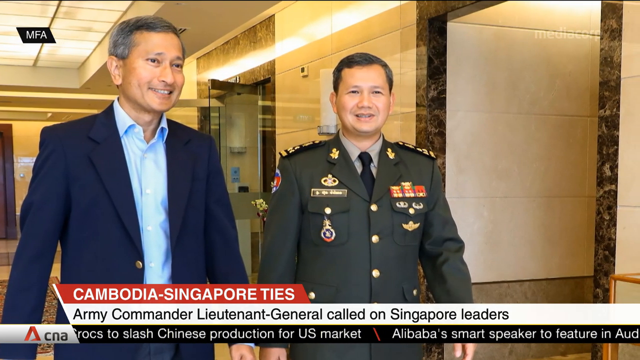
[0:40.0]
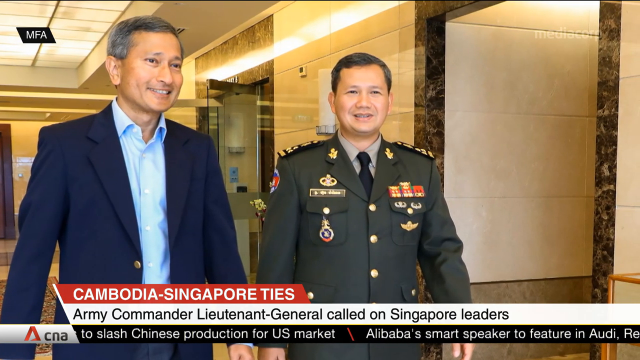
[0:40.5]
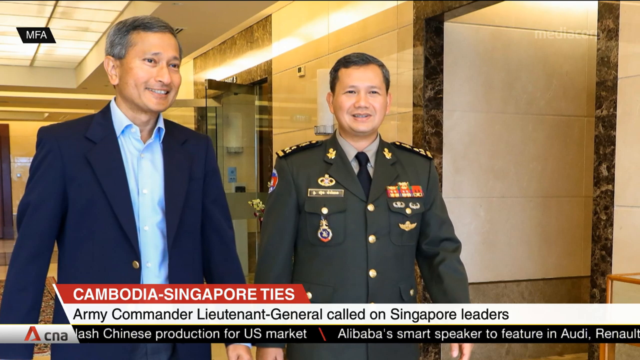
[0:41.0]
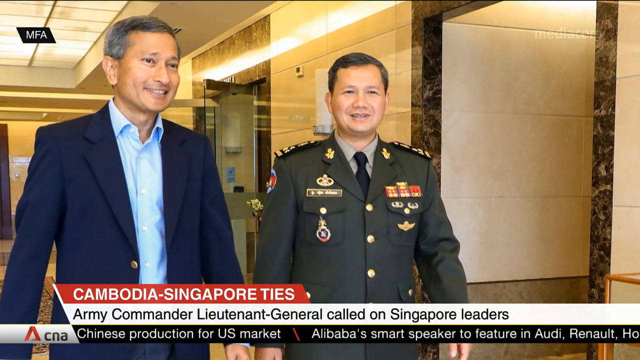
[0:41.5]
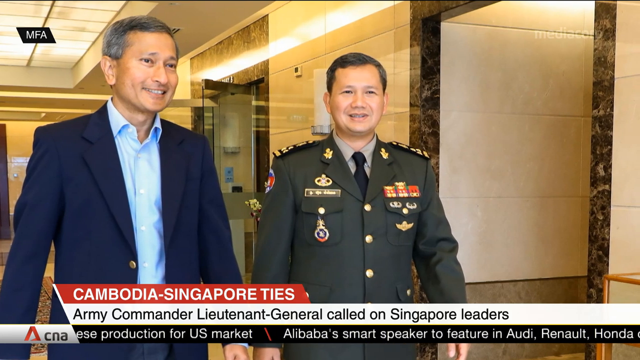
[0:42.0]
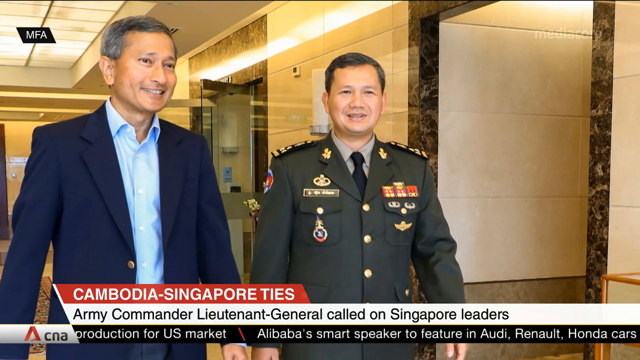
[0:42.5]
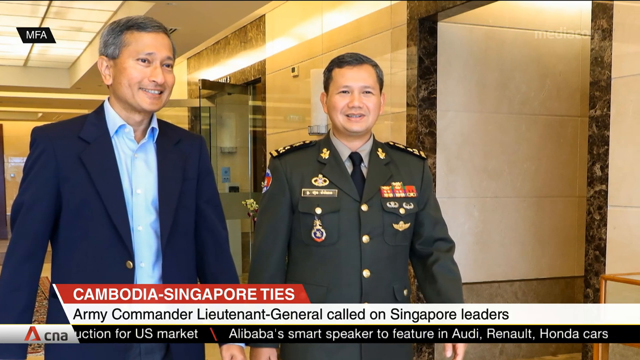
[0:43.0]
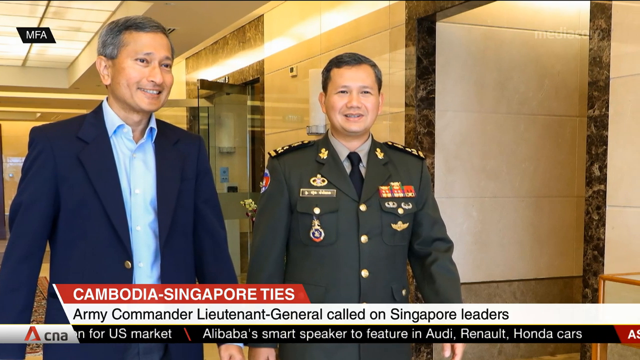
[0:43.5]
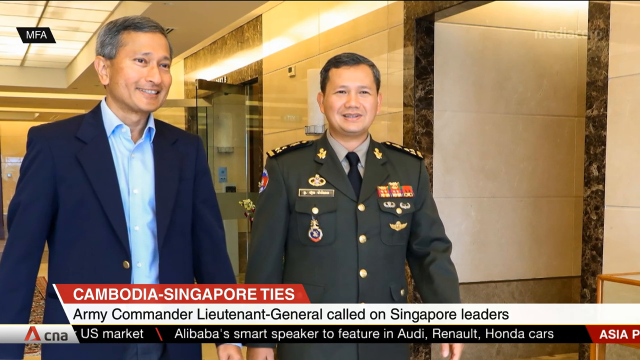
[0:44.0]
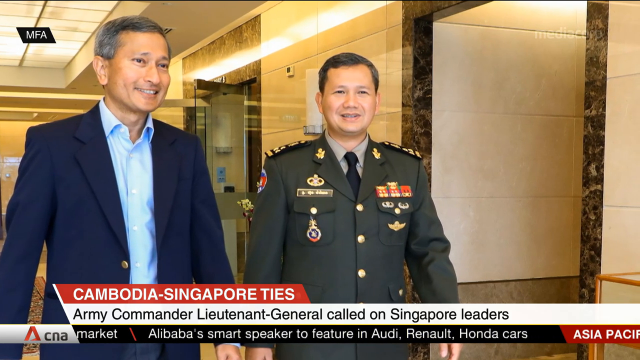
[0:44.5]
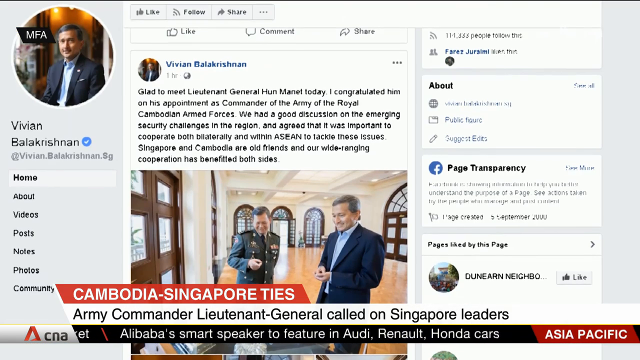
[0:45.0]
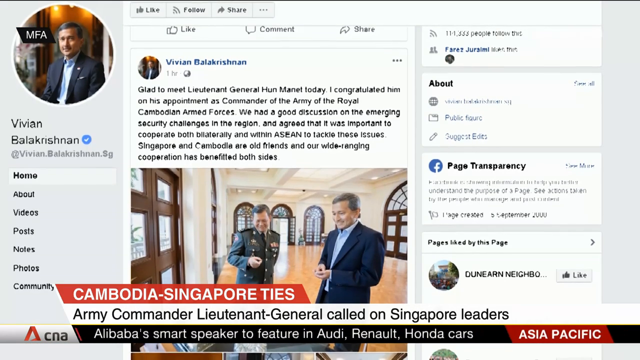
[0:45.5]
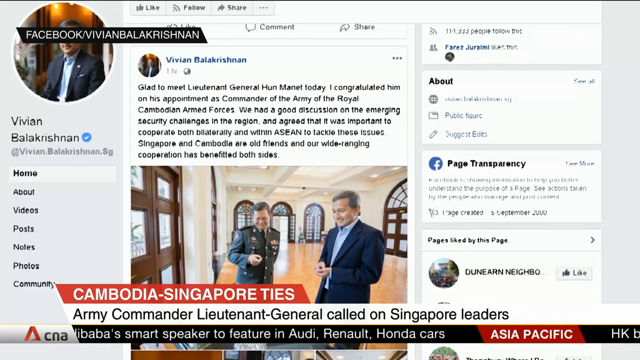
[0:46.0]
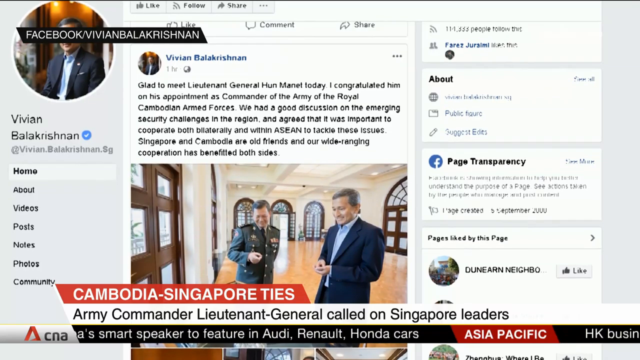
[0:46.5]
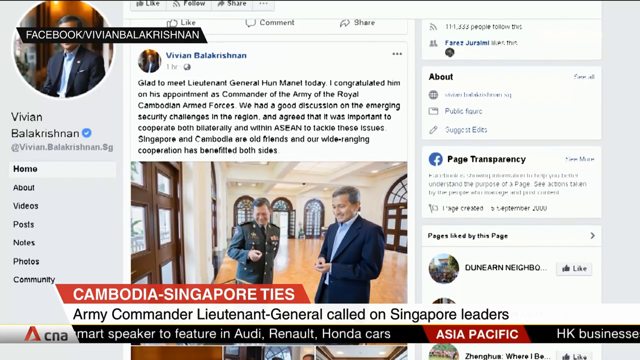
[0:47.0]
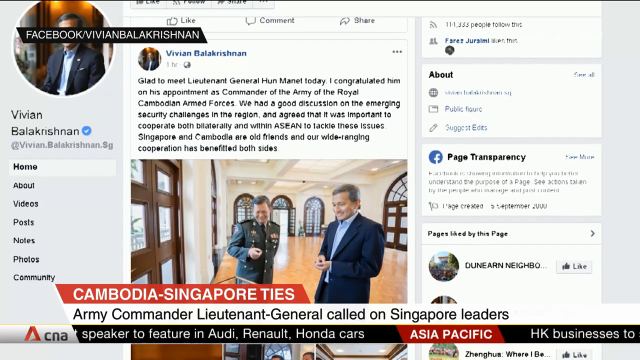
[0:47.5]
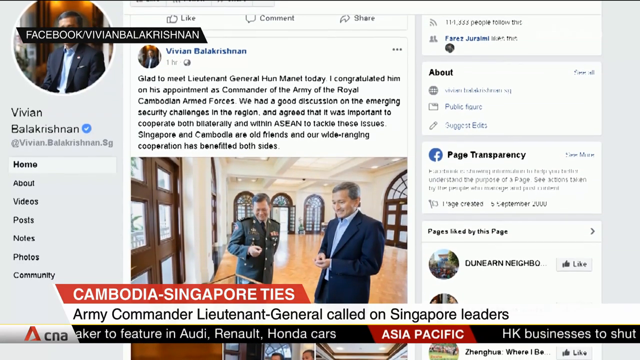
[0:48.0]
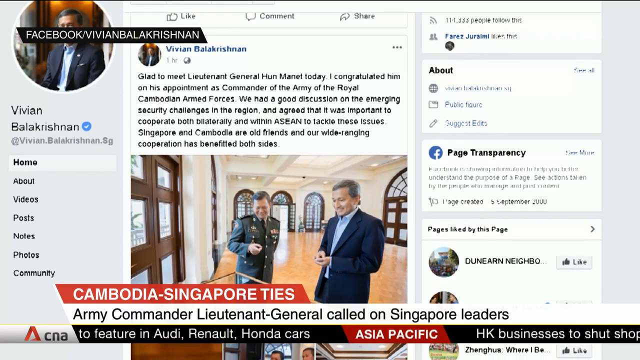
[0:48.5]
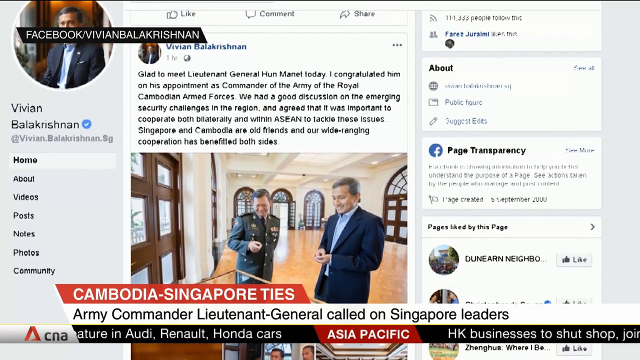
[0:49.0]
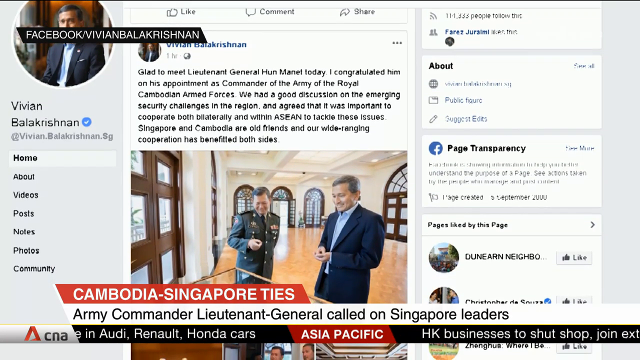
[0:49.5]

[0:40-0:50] A static image shows two men appearing to walk in a hallway whose walls appear to be marble and which is quite well lit. The man on the right is in a dark green military uniform with several medals, a light brown shirt and a black tie. The man on the left wears a navy blue blazer and a light blue shirt with the top button open, and no tie. Both men appear to be smiling and have friendly faces. The screen then transitions to a Facebook web page and slowly scrolls through the Facebook page of someone named Vivian Balakrishnan.